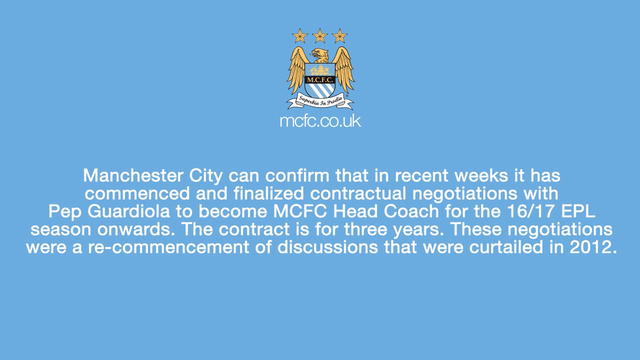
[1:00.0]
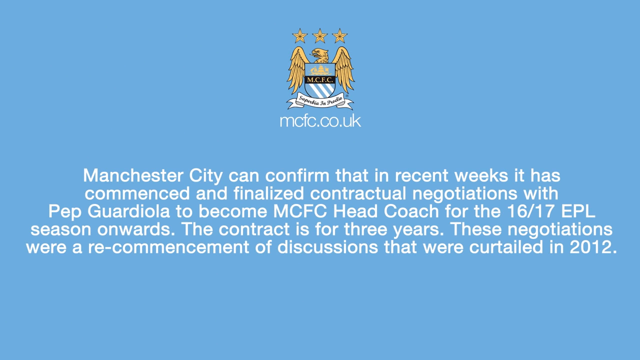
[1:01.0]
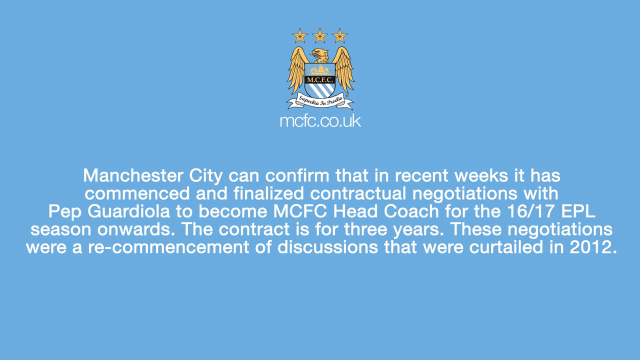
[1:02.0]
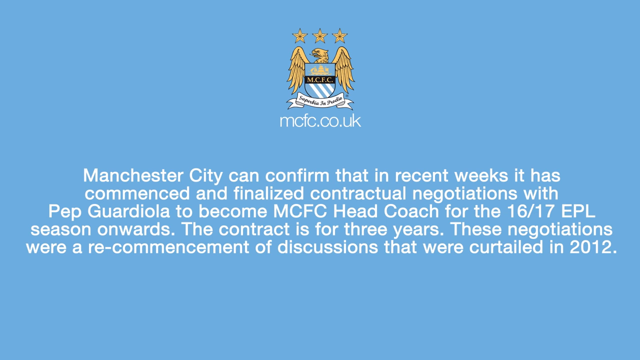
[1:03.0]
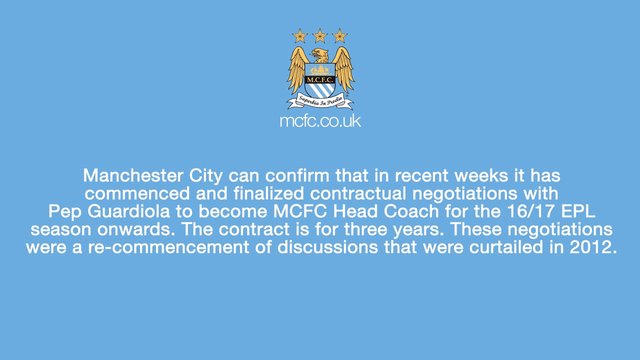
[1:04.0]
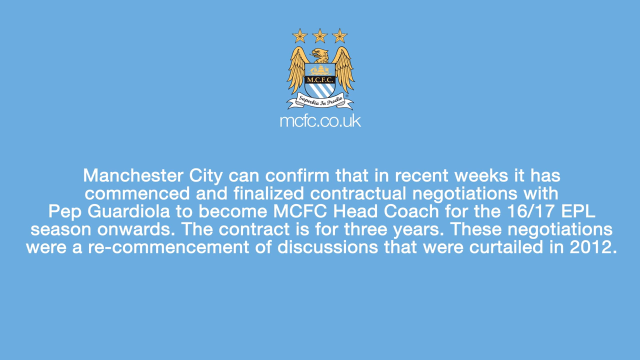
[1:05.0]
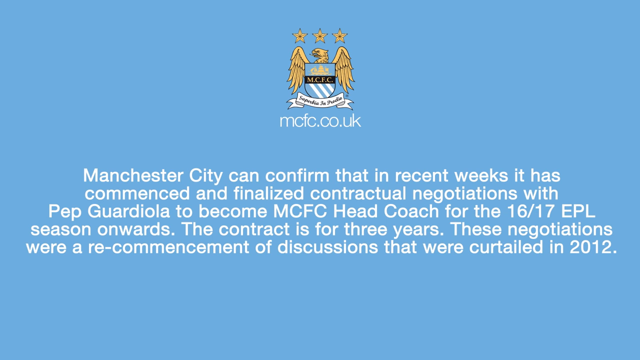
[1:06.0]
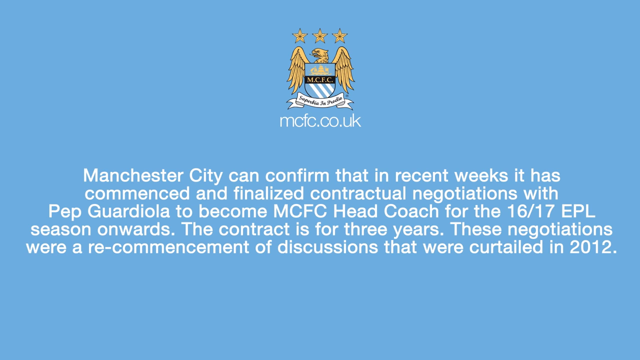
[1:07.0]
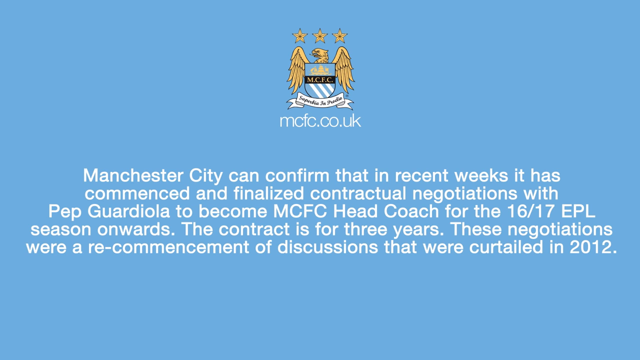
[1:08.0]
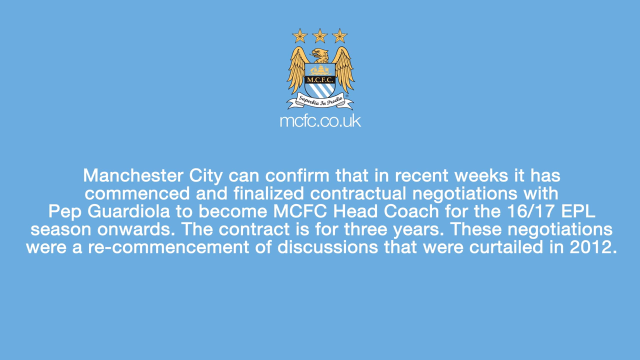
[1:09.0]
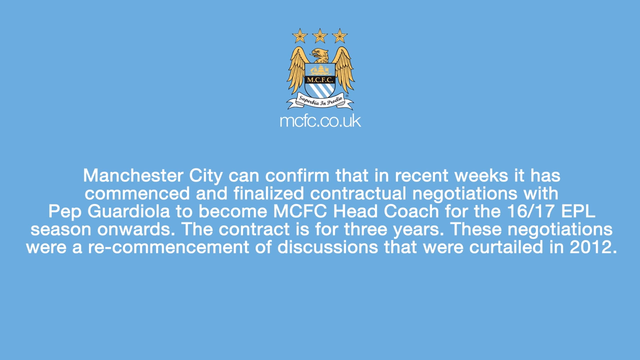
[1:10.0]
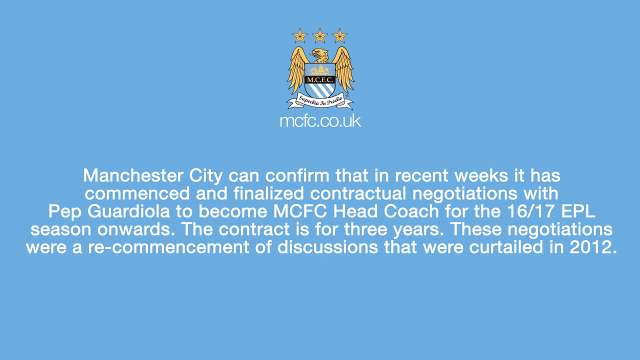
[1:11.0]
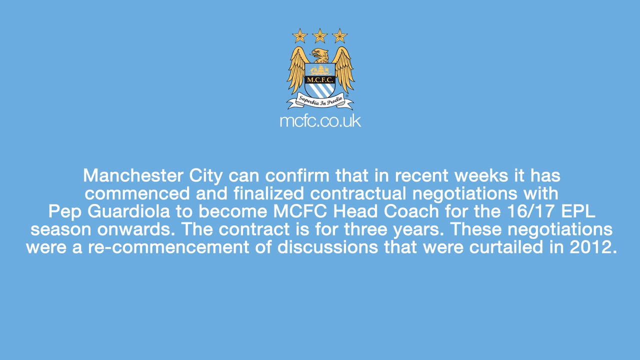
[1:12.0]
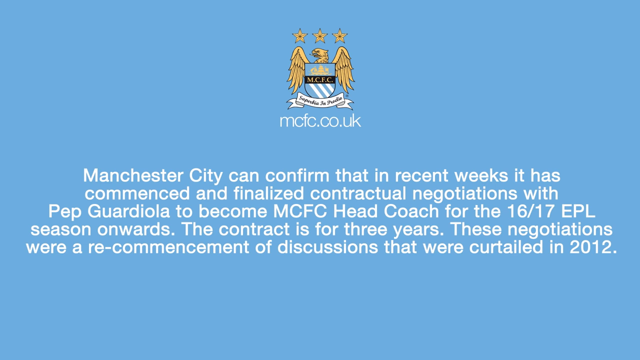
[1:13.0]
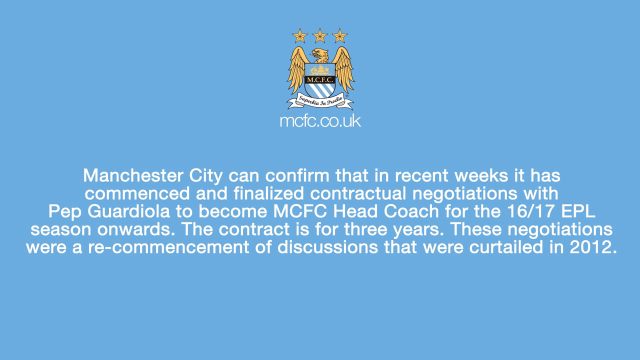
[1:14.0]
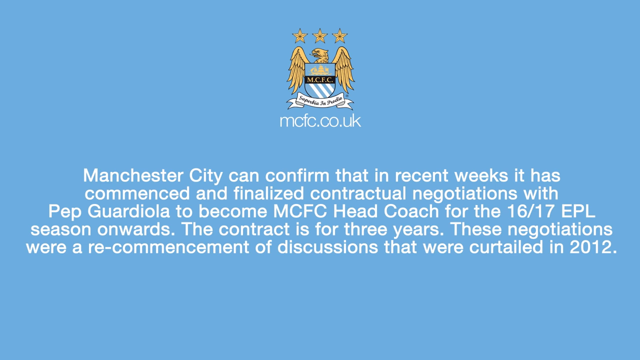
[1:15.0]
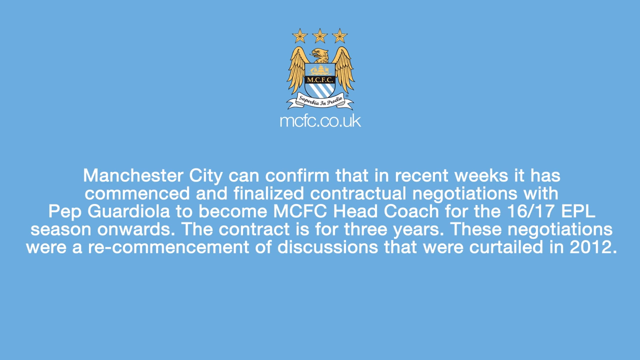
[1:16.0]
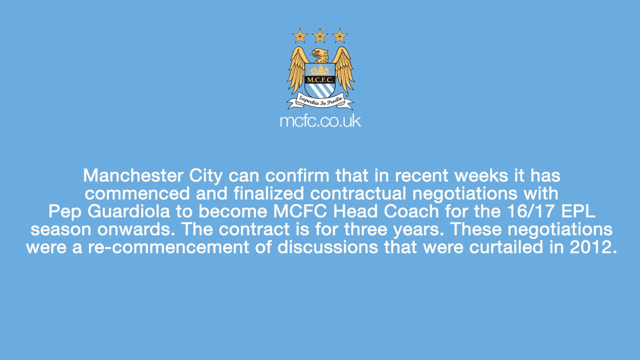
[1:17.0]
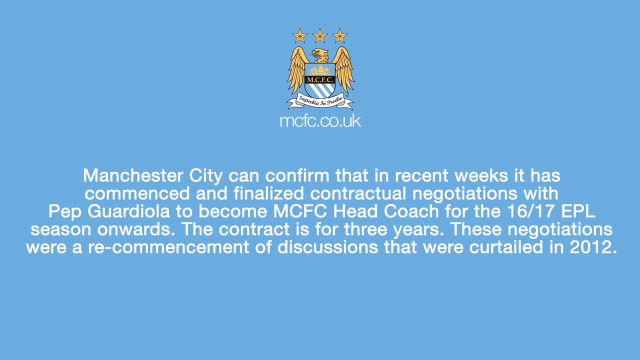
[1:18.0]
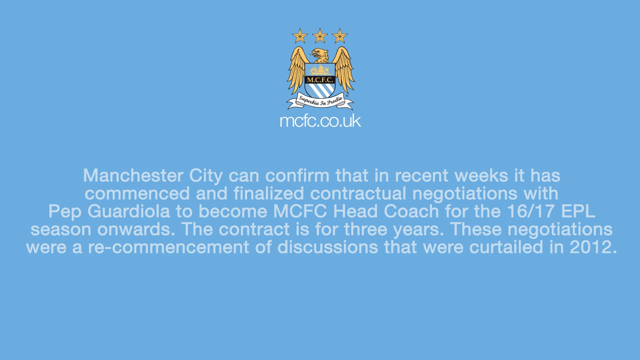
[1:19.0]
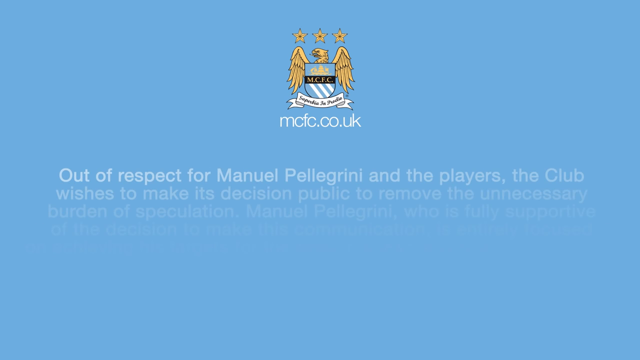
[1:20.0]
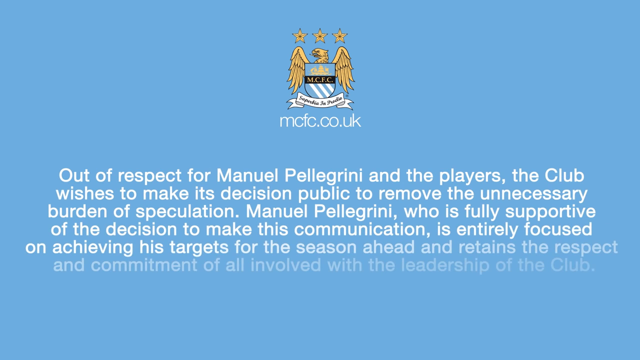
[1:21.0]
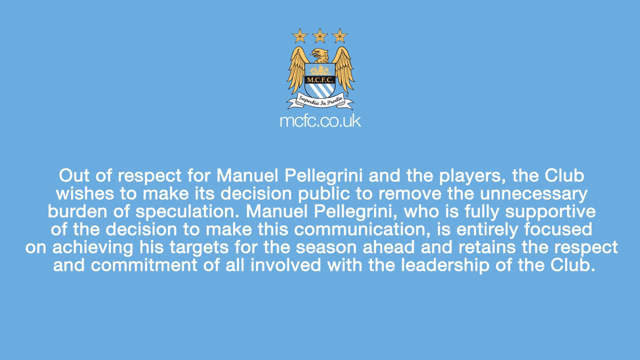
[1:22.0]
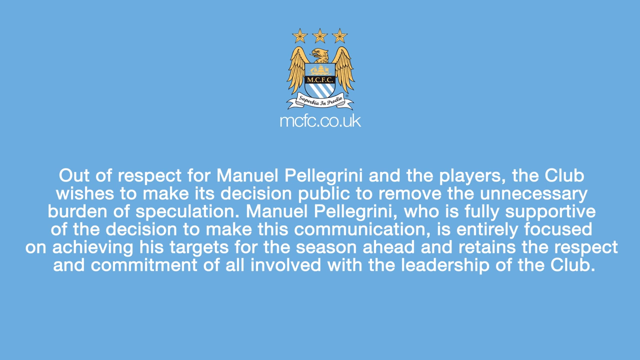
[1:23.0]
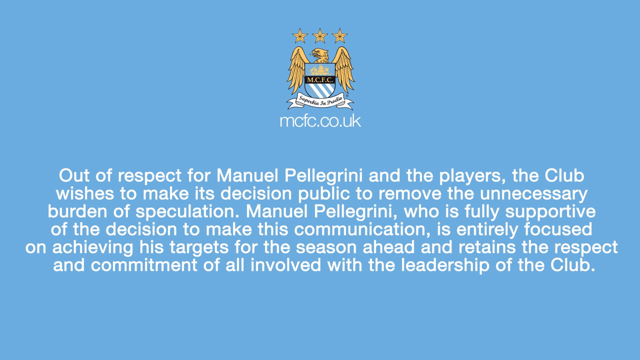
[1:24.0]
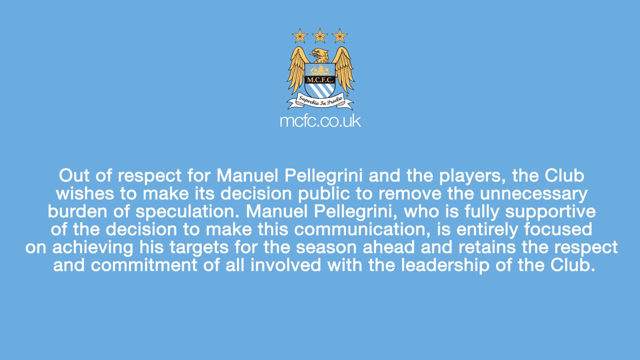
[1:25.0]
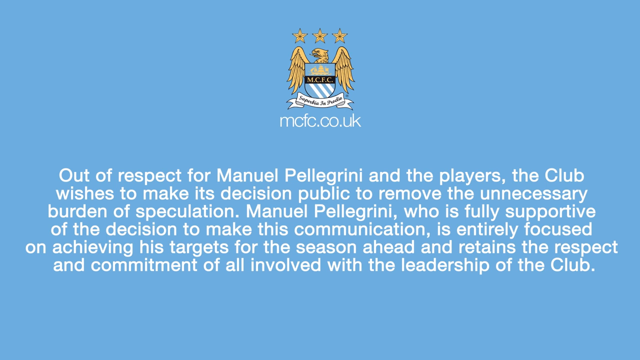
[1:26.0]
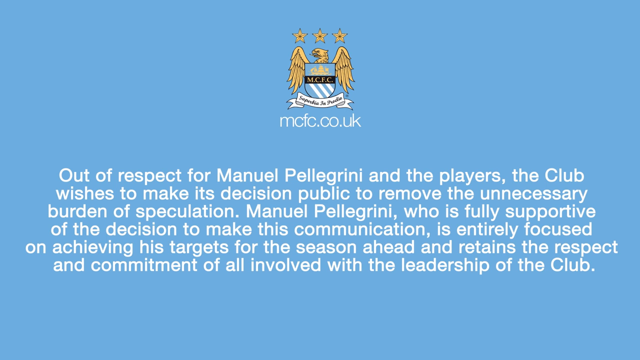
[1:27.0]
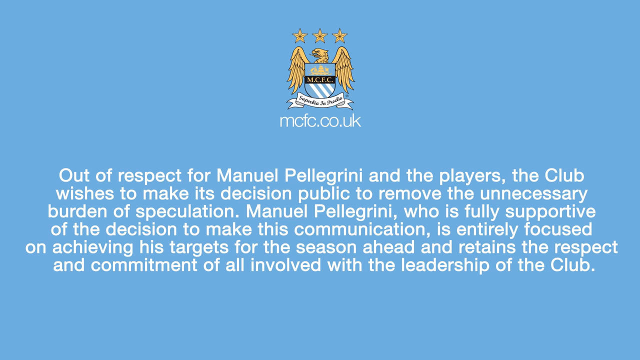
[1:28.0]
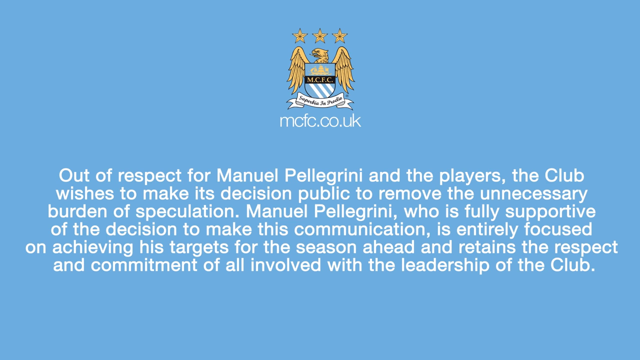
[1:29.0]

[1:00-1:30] A blue background has a coat of arms at the top for MCSC, with a golden eagle behind it and three stars above. A message is written on the blue screen in white: "Manchester City can confirm that in recent weeks it has commenced and finalised contractual negotiations with Pep Guardiola to become MCFC head coach for the 16-17 EPL session onwards. The contract is for three years. These negotiations were a recommencement of discussions that were curtailed in 2012." This message stays on the screen for 20 seconds and is followed by another message in white: "Out of respect for Manuel Pellegrini and the players, the club wishes to make its decision public to remove the unnecessary burden of speculation. Manuel Pellegrini, who is fully supportive of the decision to make this communication, is entirely focused on achieving his targets for the season ahead and retains the respect and commitment of all involved with the leadership of the club." These two messages are the only things on screen.